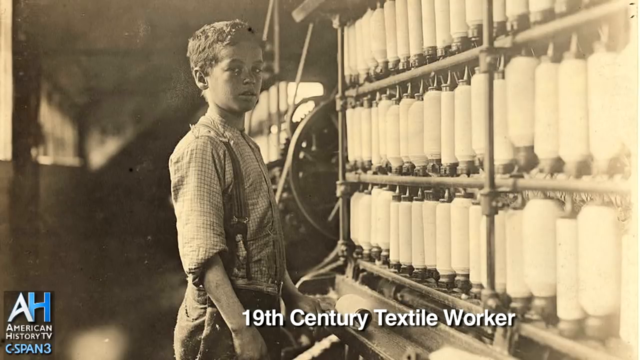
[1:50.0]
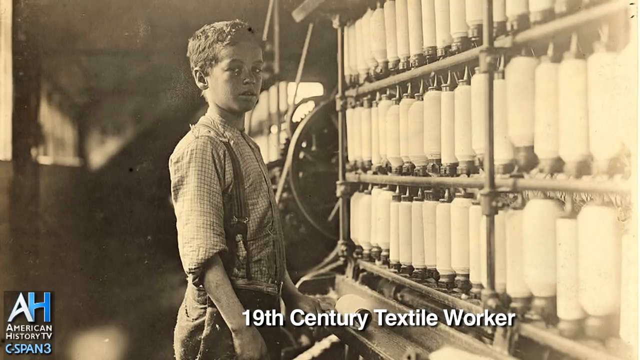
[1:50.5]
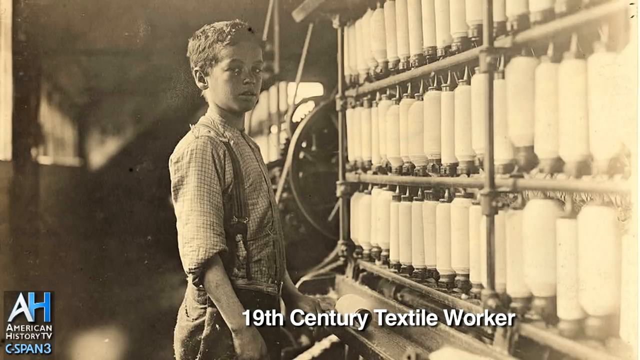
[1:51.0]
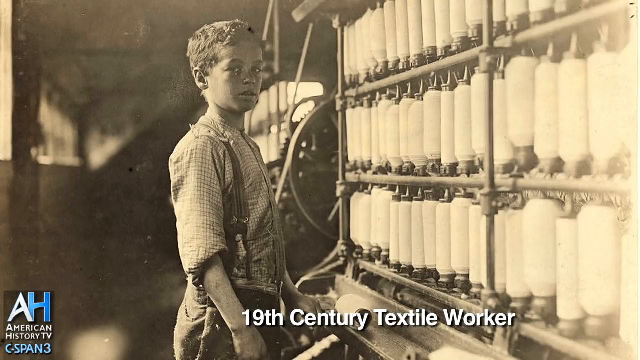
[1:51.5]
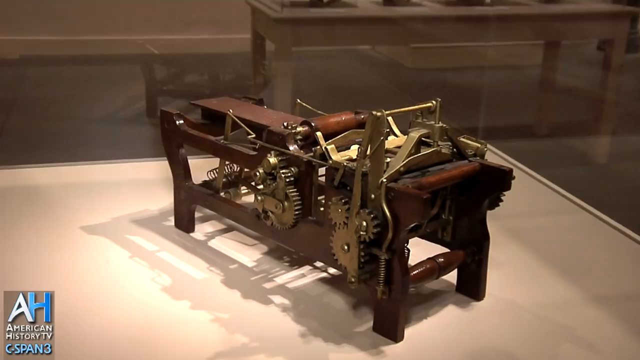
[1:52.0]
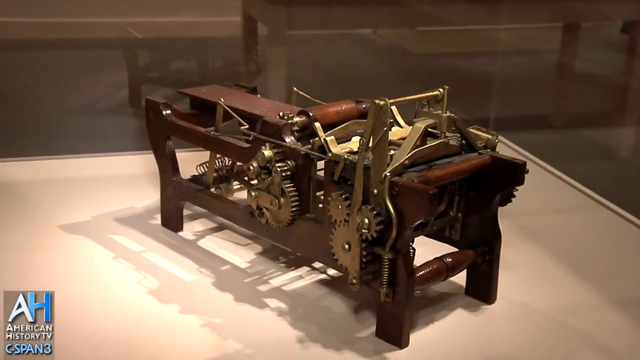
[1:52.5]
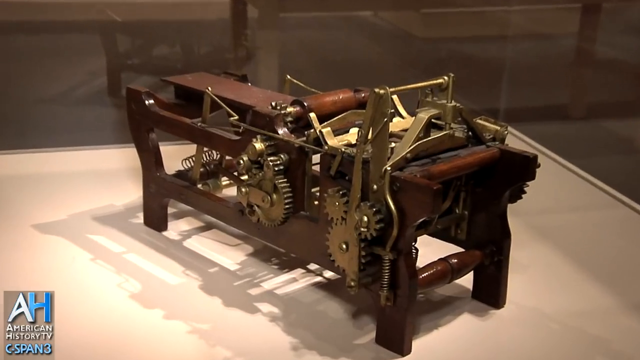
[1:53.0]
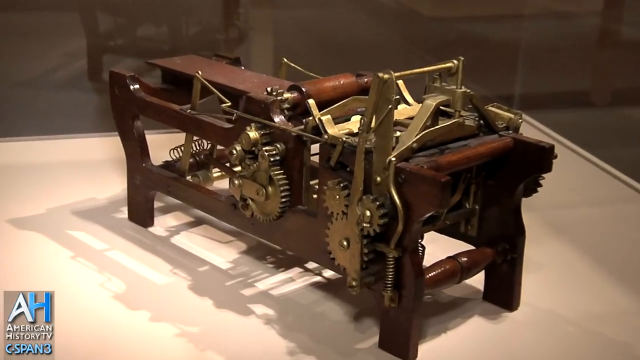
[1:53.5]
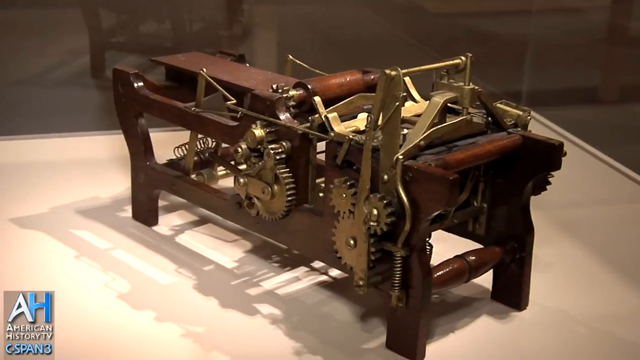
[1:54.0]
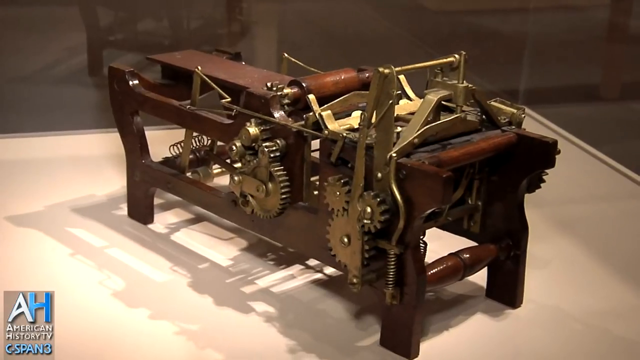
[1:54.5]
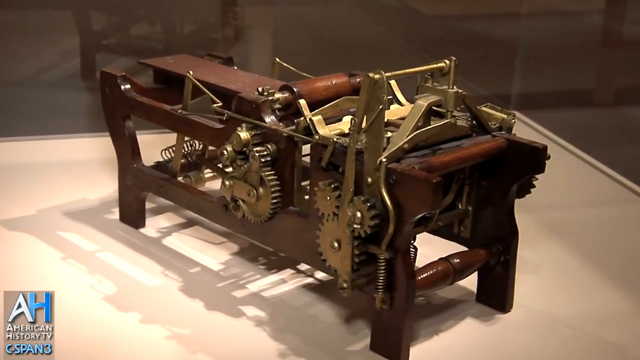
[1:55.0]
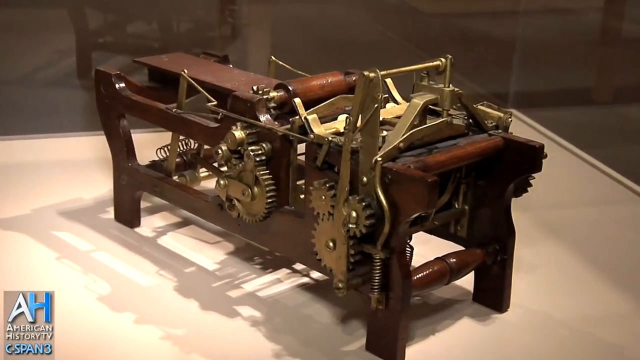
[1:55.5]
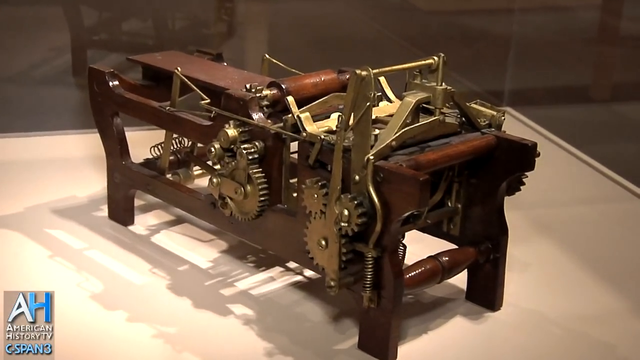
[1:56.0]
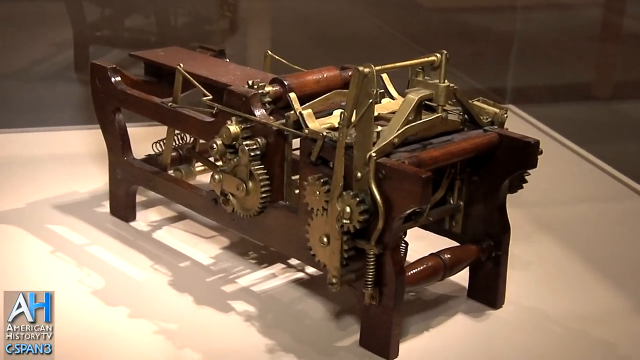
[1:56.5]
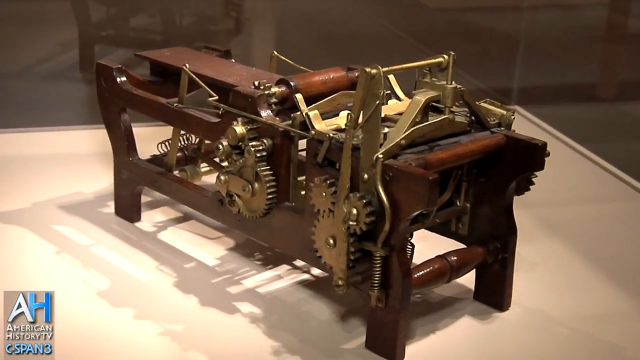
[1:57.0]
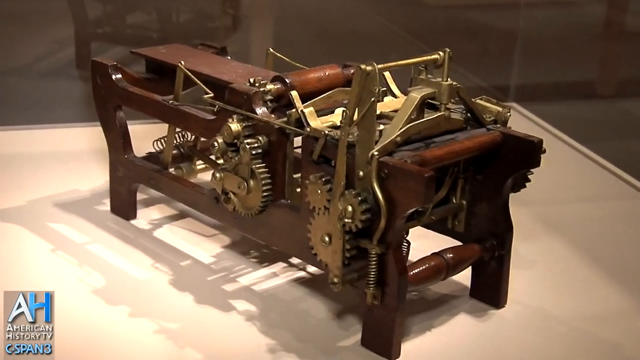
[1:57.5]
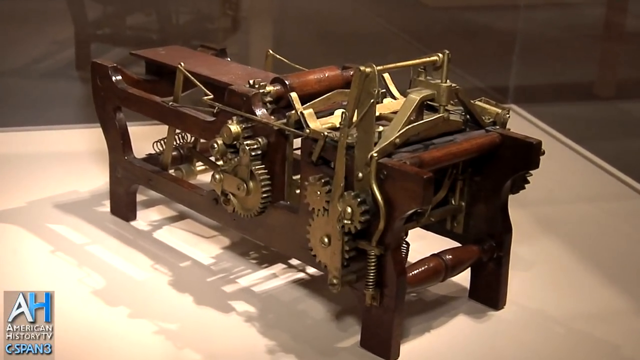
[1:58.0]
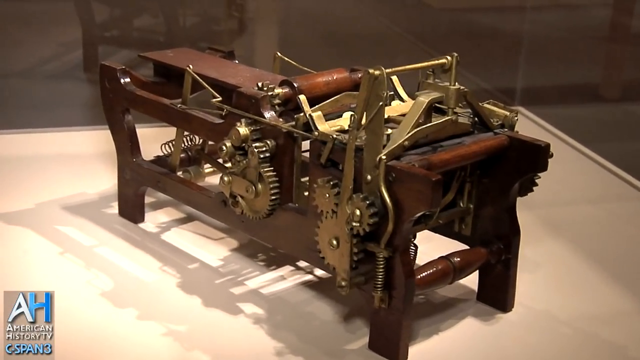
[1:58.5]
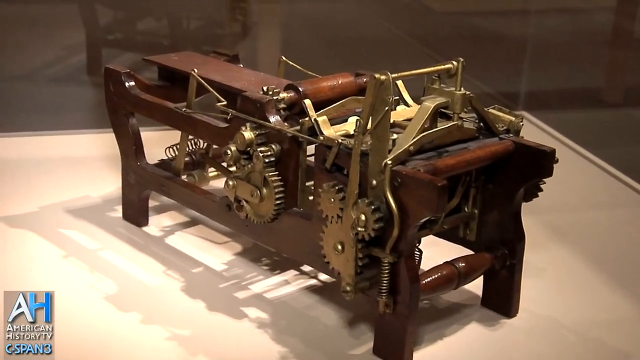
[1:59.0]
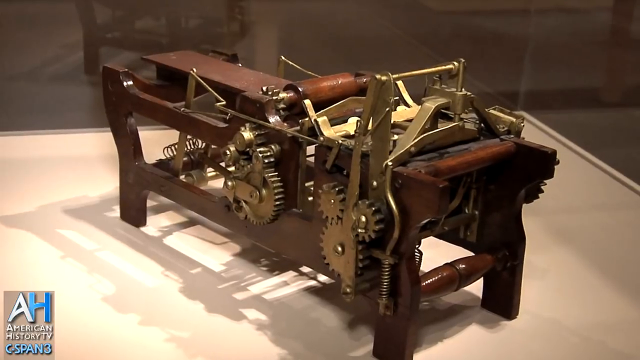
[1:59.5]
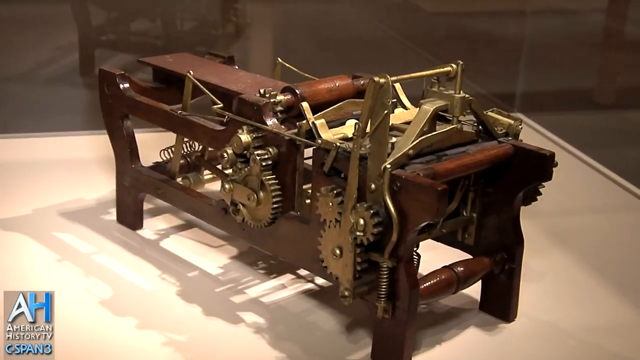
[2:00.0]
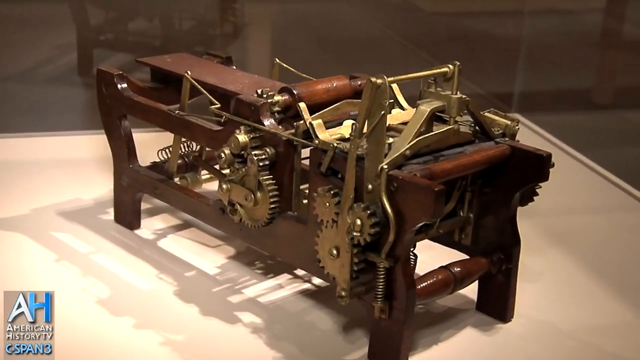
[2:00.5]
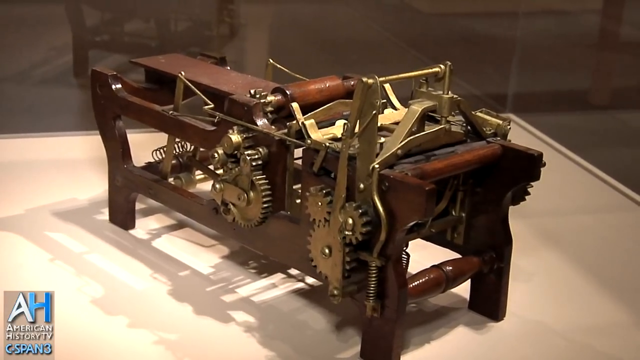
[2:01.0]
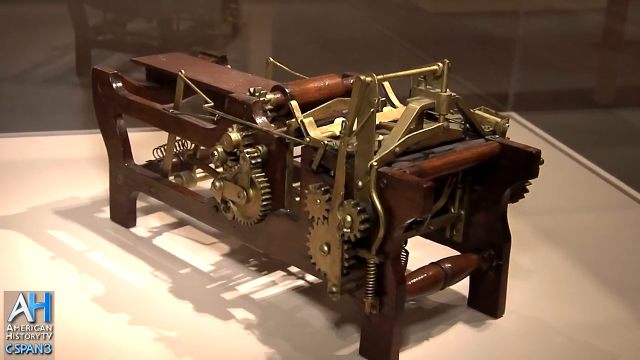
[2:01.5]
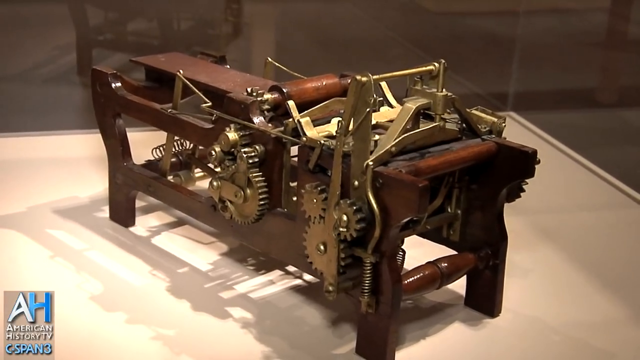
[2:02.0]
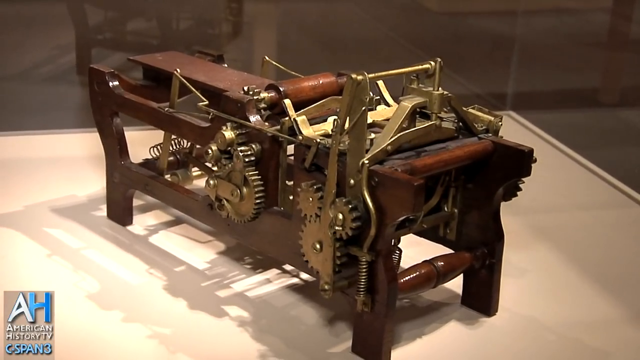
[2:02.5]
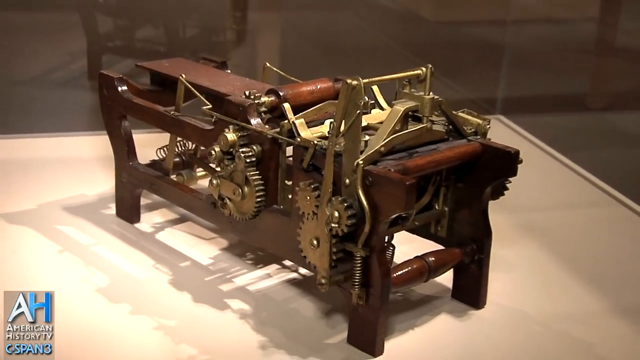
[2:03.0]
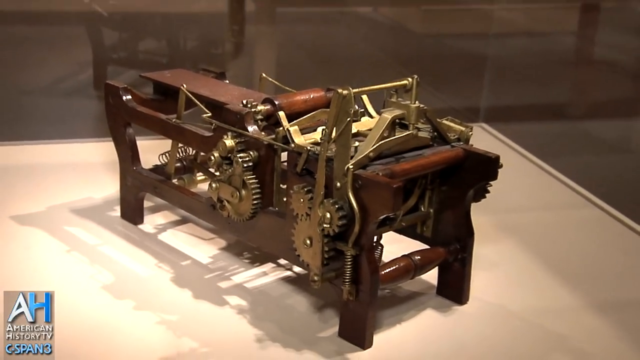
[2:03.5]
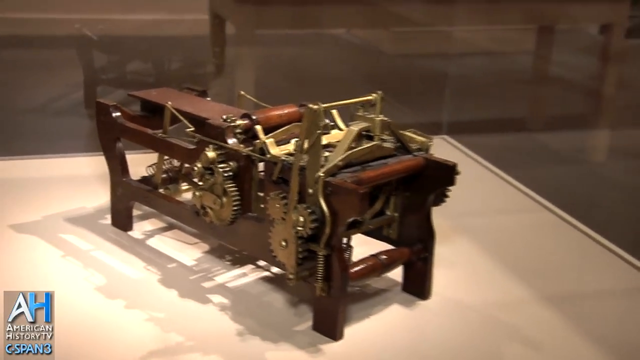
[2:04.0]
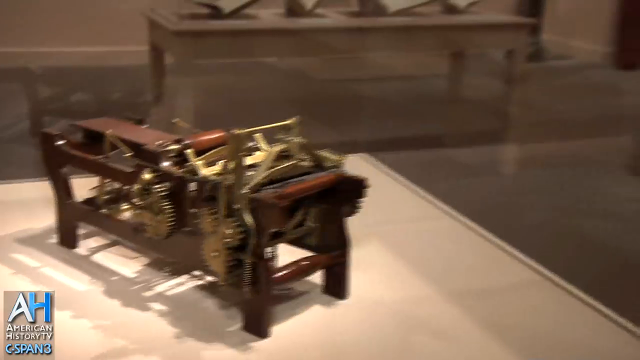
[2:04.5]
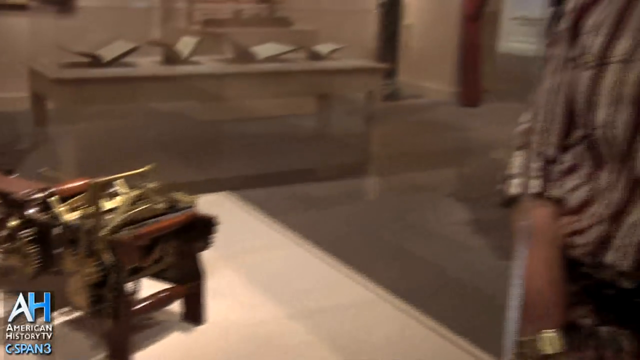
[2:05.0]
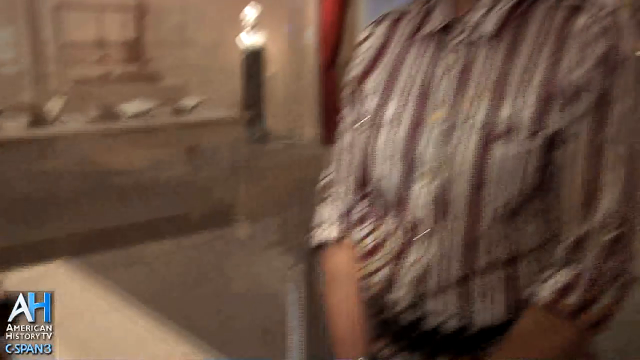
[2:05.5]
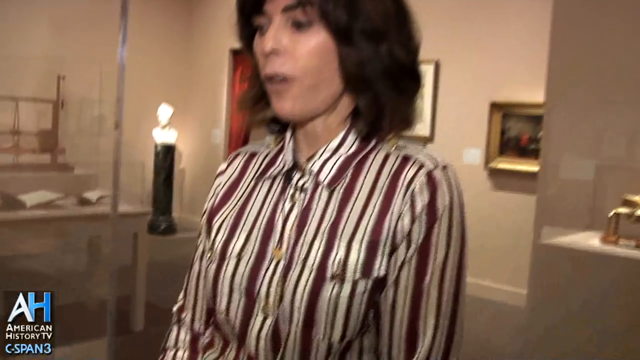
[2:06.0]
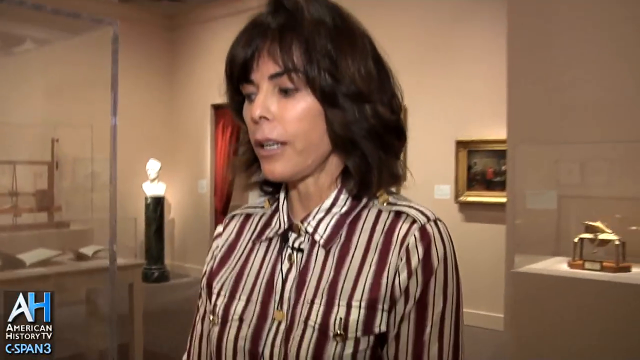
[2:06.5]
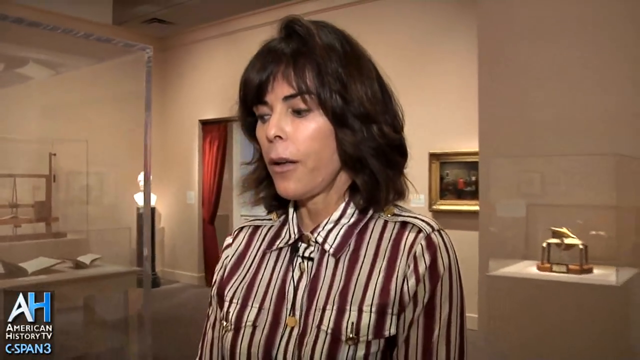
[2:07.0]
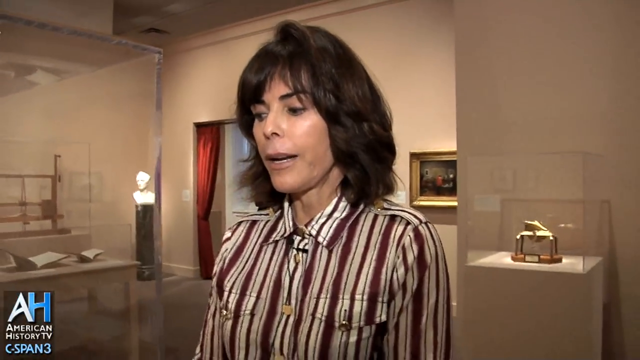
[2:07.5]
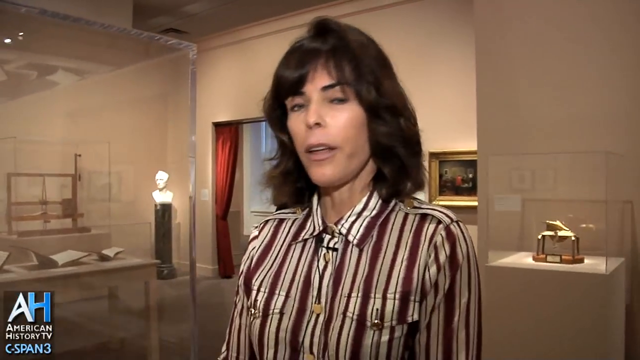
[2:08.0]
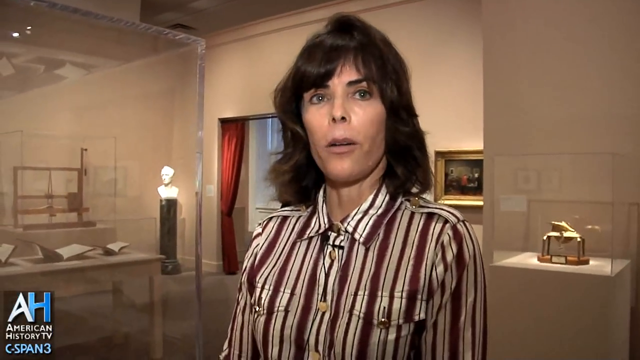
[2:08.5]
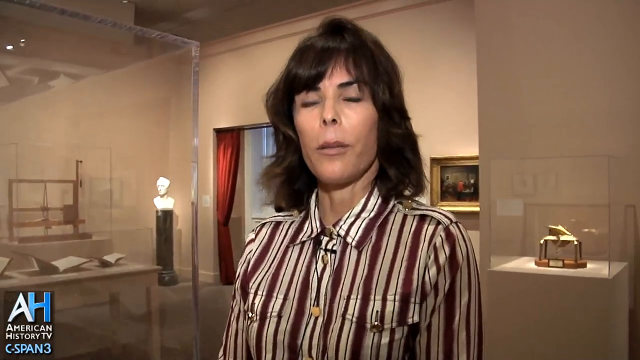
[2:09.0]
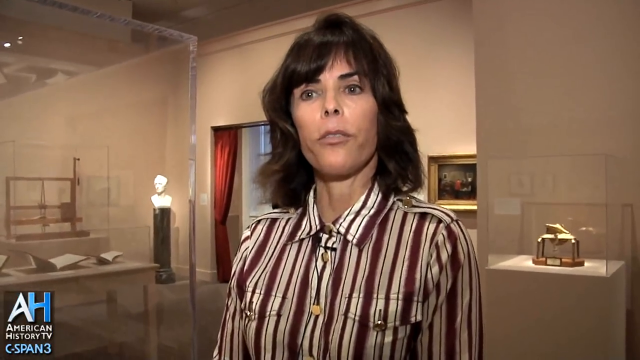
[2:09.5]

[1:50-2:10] Inside the Smithsonian Museum, a photo shows a boy with the text "19th century textile workers." He stands in front of a rack with three levels of very large bobbins of thread; he wears suspenders and a checkered shirt, has short hair and looks a little perturbed. Next is a close-up shot of an unidentified invention, apparently not a spinning jenny: it is made of wood, with a frame and brass fittings holding different kinds of gears, cogs, levers and things to turn, plus something flat. The camera pans back to the woman leading the tour, and then the video returns to the 19th century textile worker.